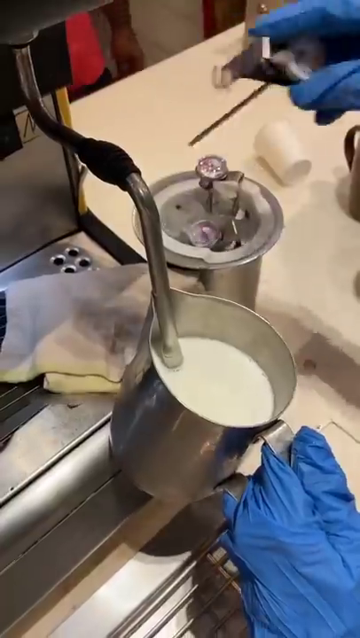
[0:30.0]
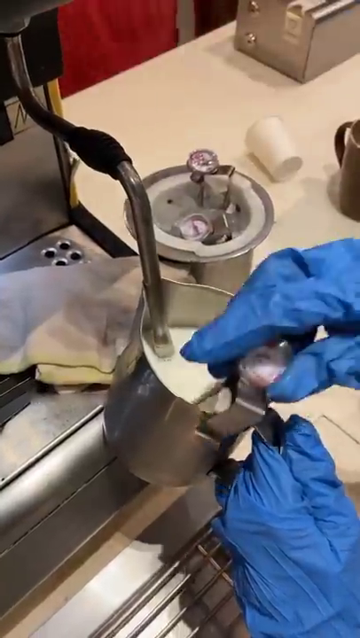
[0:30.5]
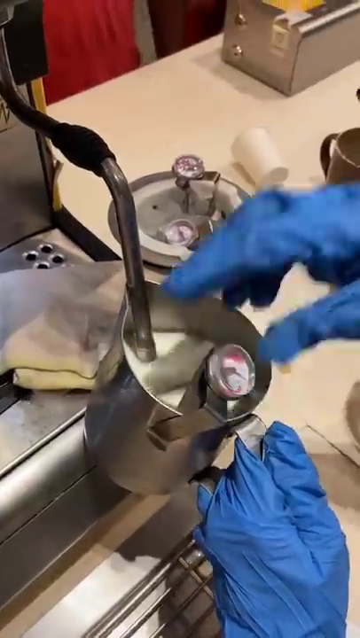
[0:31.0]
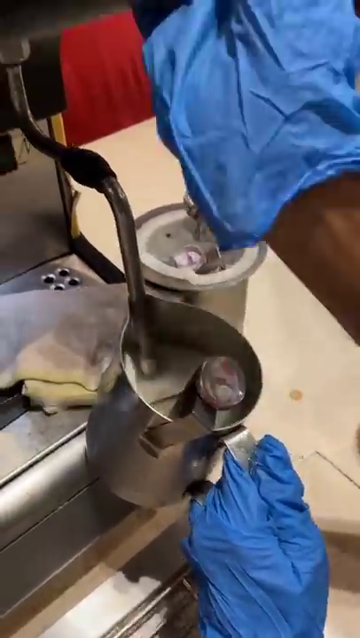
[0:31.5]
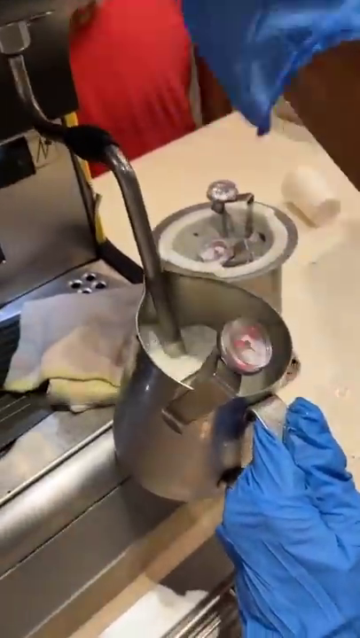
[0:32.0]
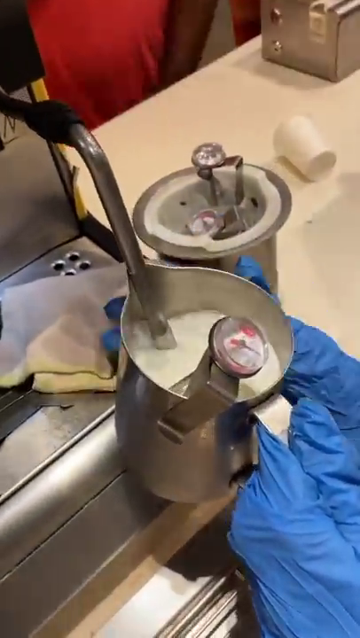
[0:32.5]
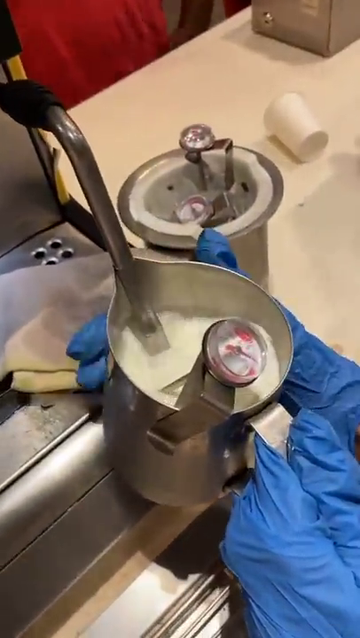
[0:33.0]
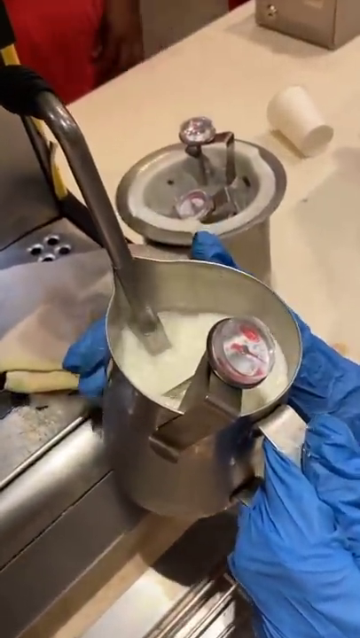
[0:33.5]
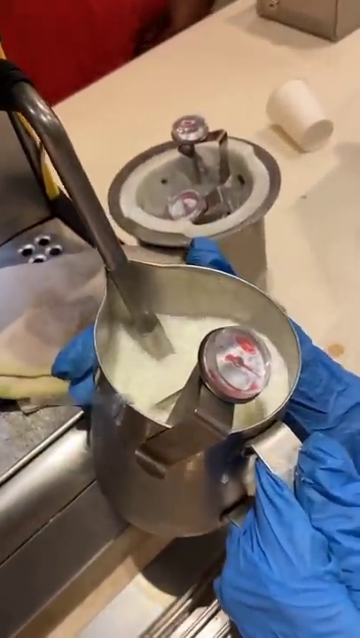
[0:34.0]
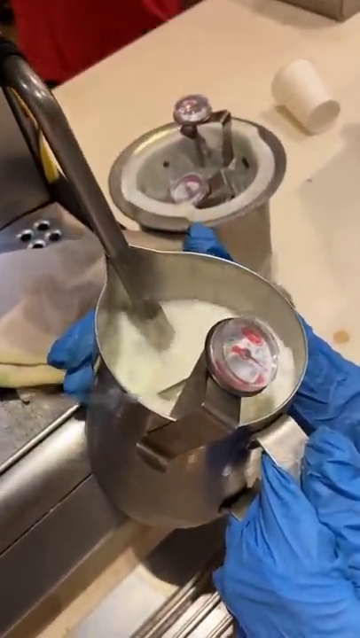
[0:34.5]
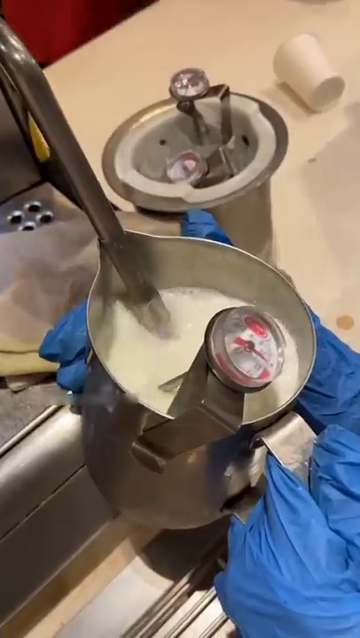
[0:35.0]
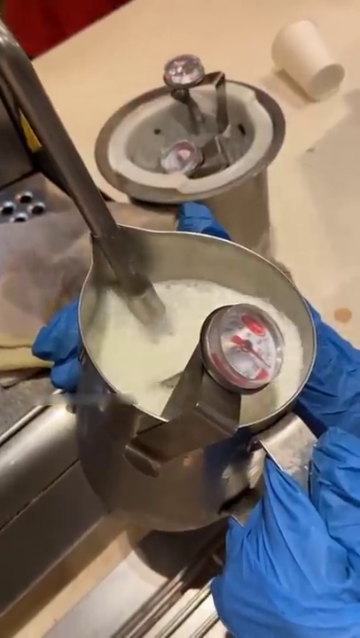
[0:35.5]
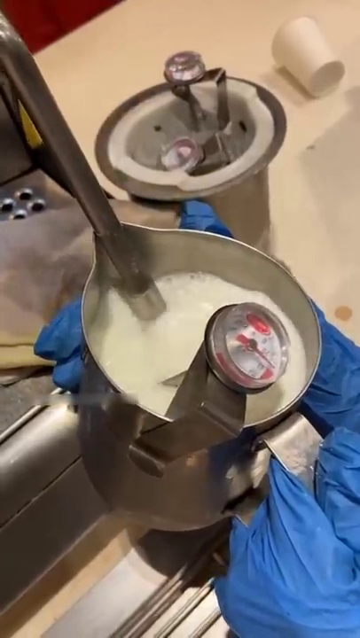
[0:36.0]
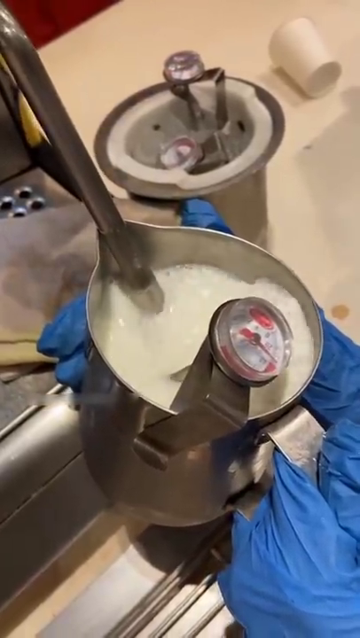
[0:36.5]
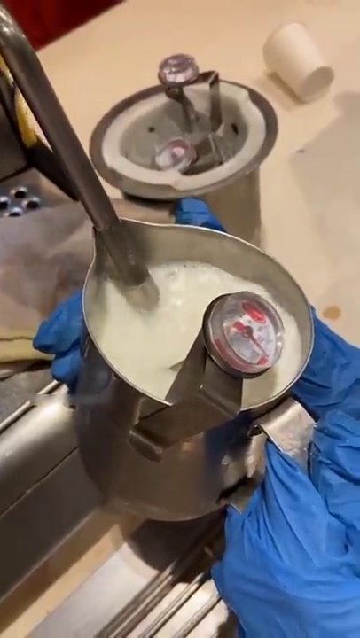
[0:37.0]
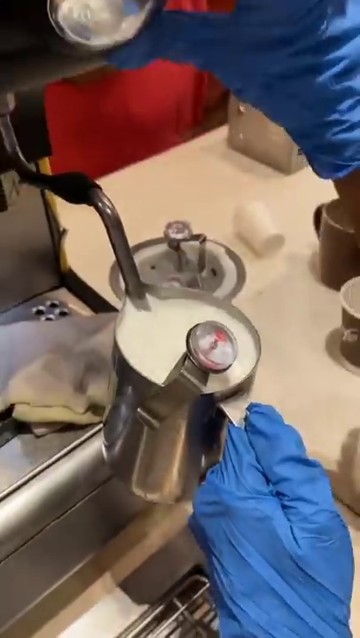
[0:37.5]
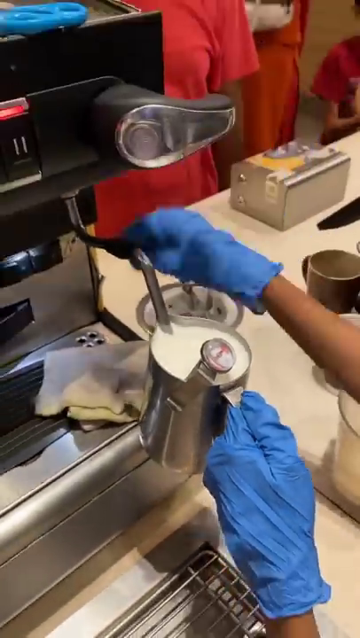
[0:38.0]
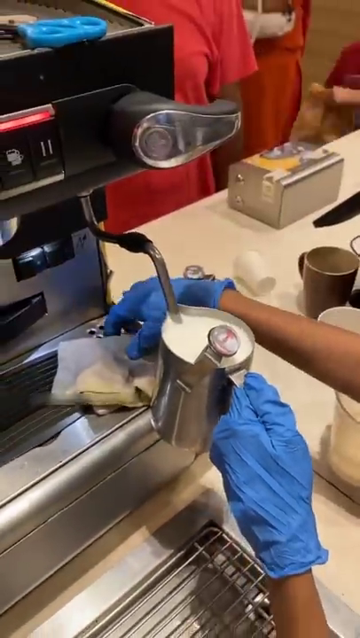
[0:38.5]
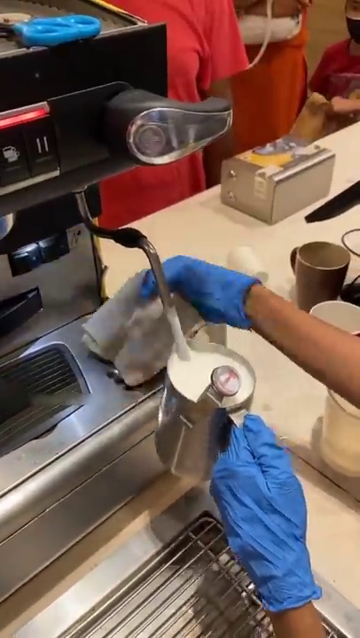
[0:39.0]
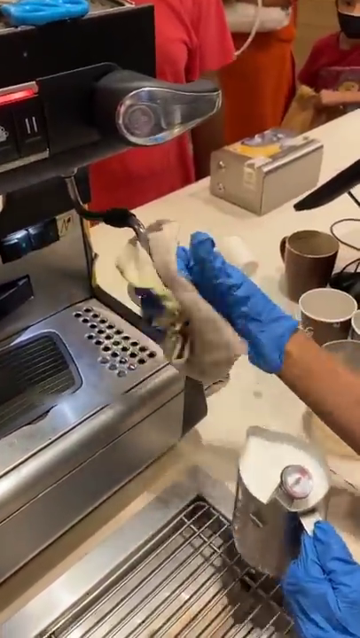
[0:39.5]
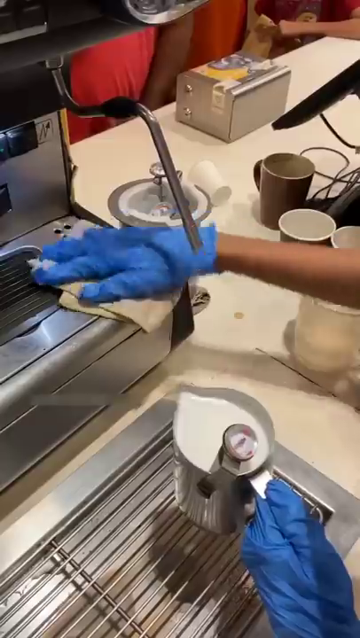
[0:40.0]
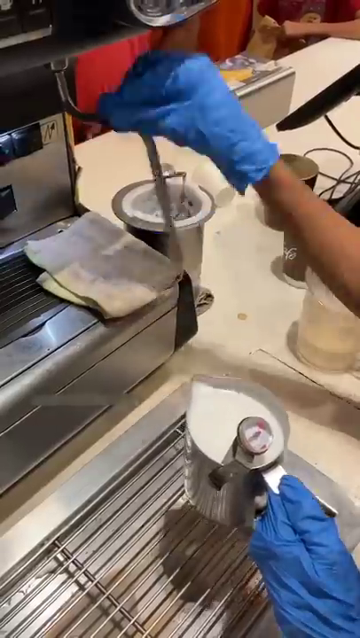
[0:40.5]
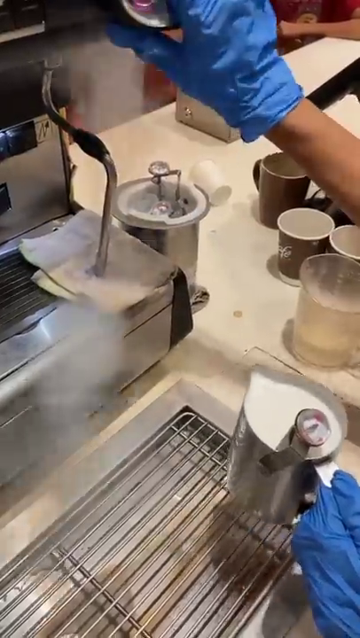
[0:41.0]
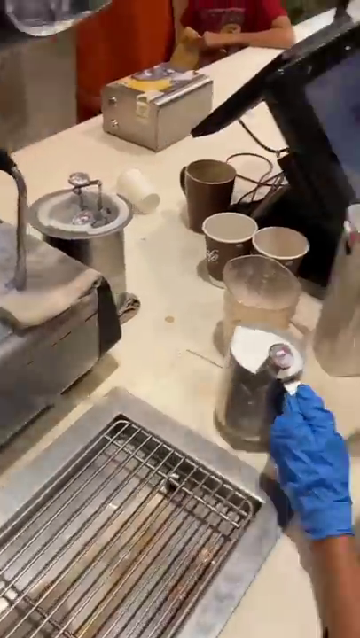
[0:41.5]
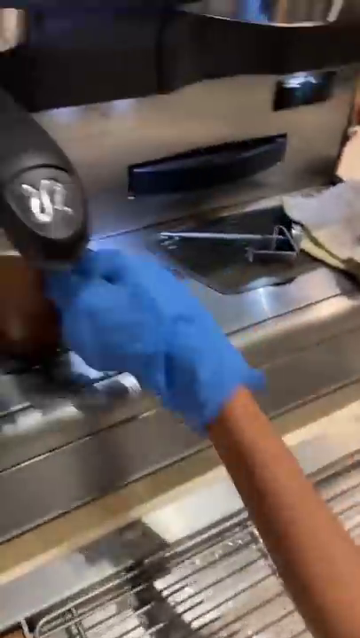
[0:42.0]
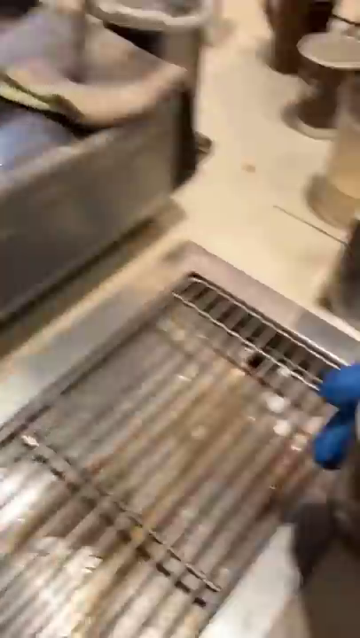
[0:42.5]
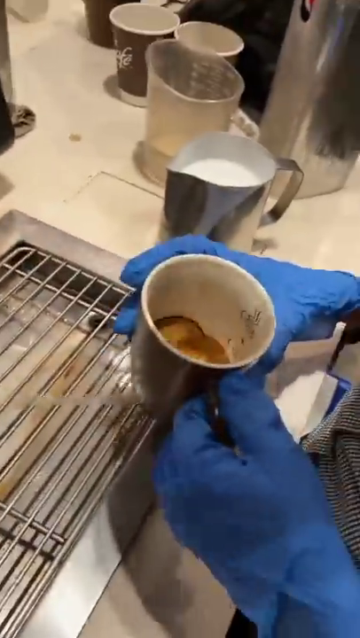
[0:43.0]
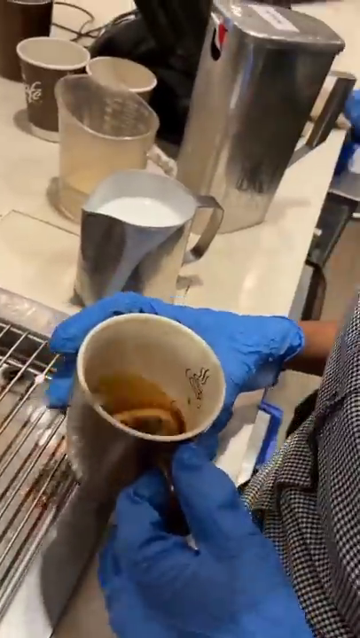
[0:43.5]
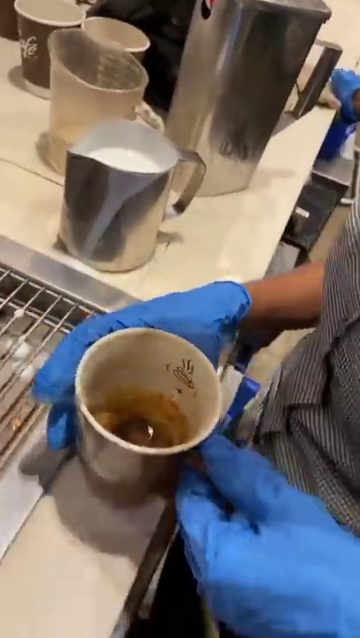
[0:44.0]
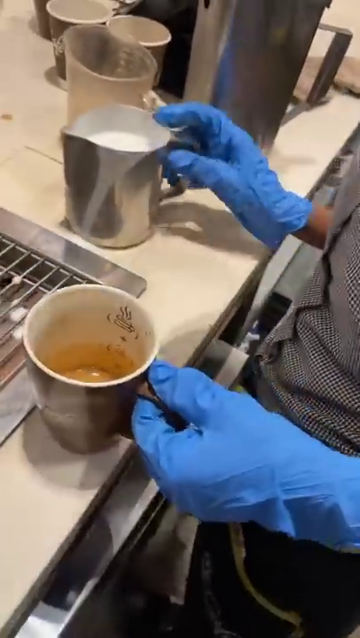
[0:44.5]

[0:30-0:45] In what appears to be an industrial or restaurant kitchen, a person seen only by their hands, which wear blue latex gloves, holds the handle of a small silver container. A silver rod is inside the pitcher of milk, and the person sticks what appears to be a food thermometer into it. They turn on the machine, and the milk bubbles and froths while they hold the pitcher very steady. They turn off the mechanism and wipe off the silver rod with a white cloth, then do something to the rod that causes a puff of steam to come out of its end. They take a cup of coffee off the machine, swirl it around a bit, and pick up the pitcher of milk, presumably to add it to the coffee.